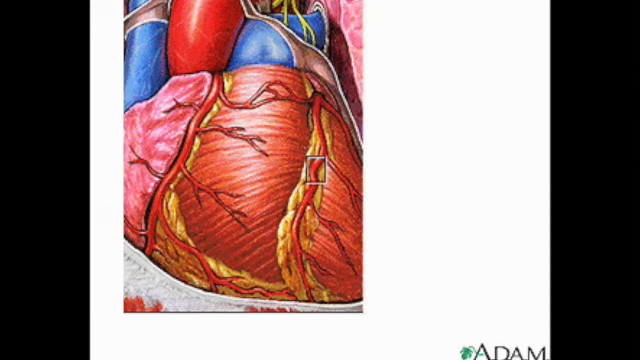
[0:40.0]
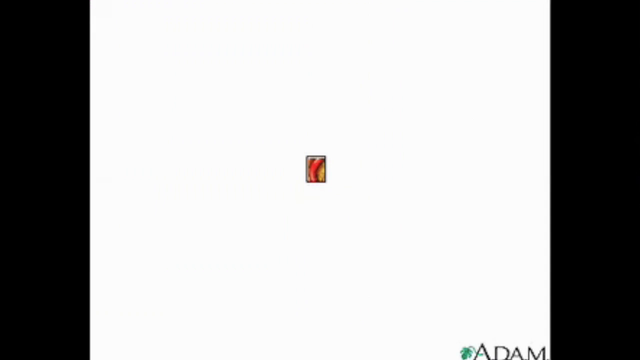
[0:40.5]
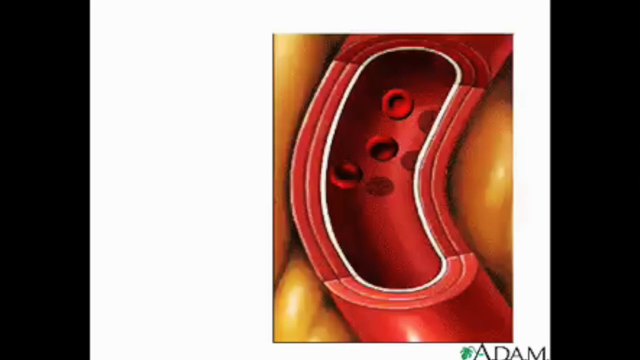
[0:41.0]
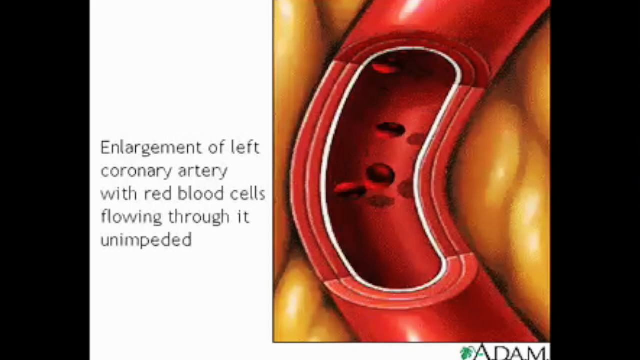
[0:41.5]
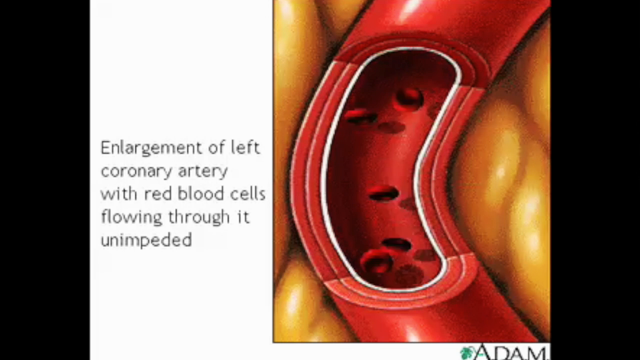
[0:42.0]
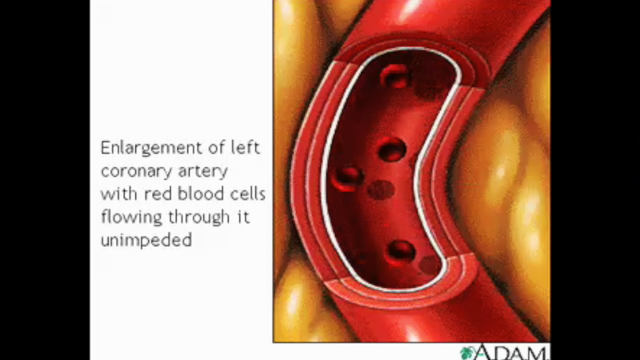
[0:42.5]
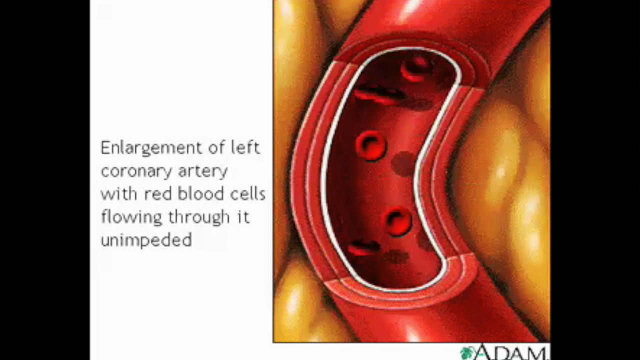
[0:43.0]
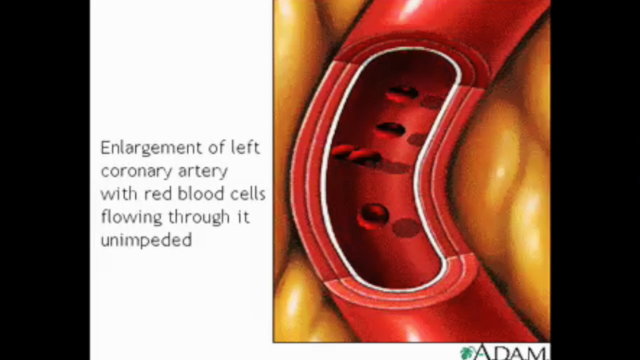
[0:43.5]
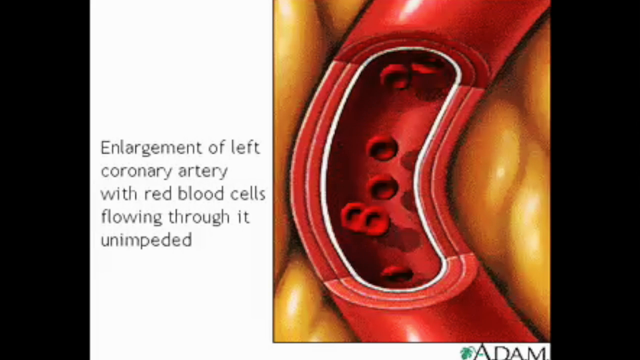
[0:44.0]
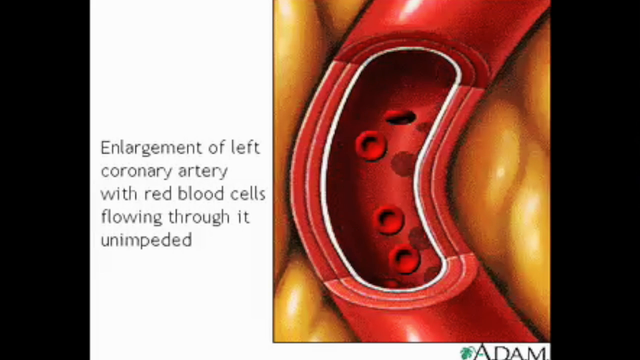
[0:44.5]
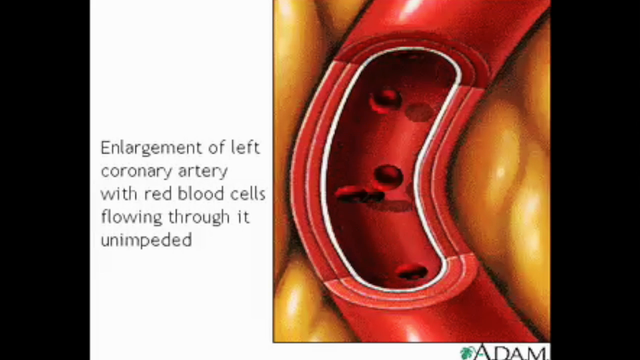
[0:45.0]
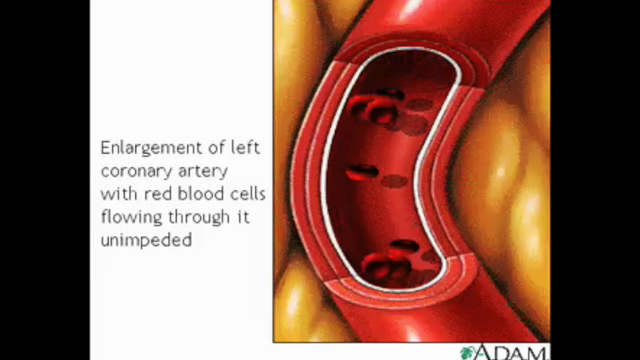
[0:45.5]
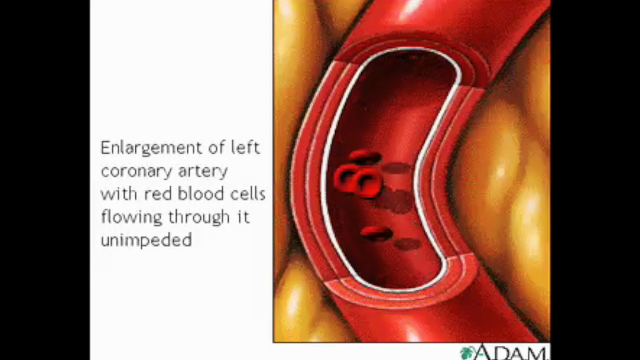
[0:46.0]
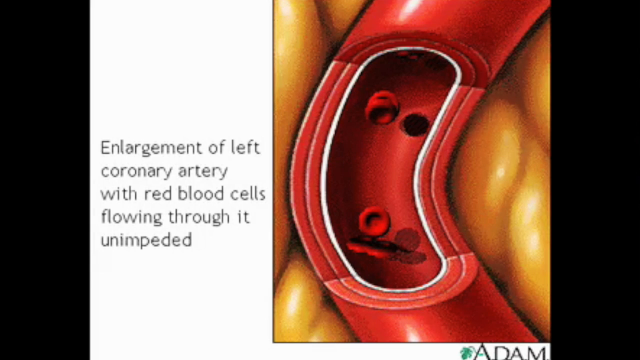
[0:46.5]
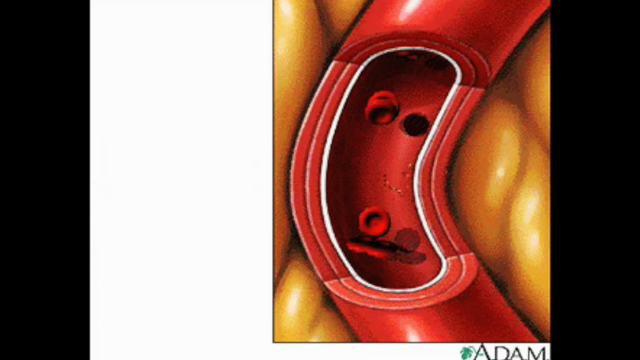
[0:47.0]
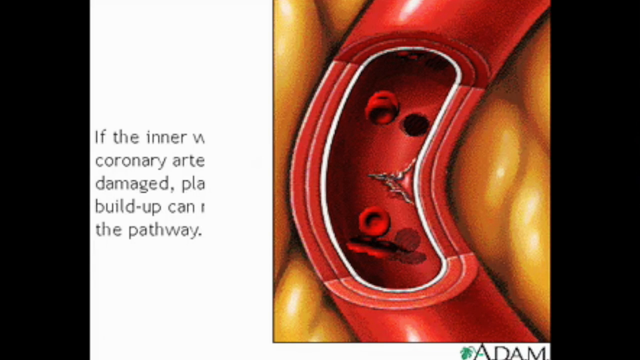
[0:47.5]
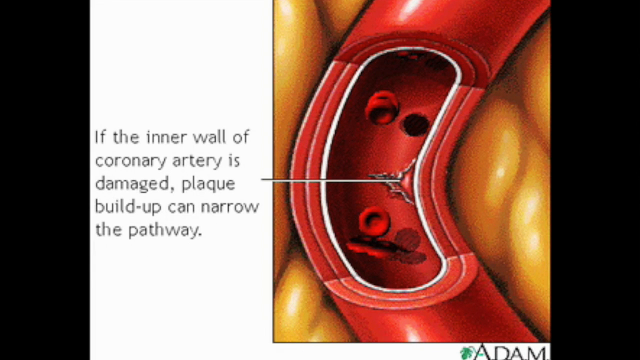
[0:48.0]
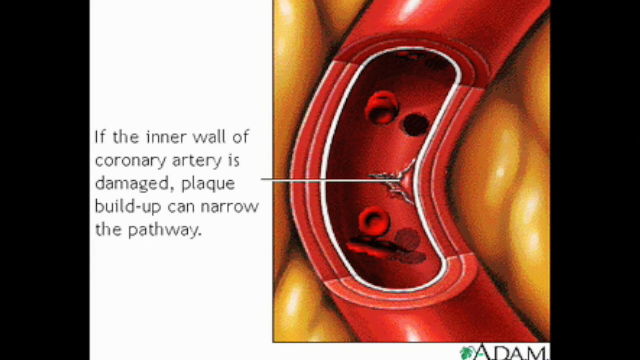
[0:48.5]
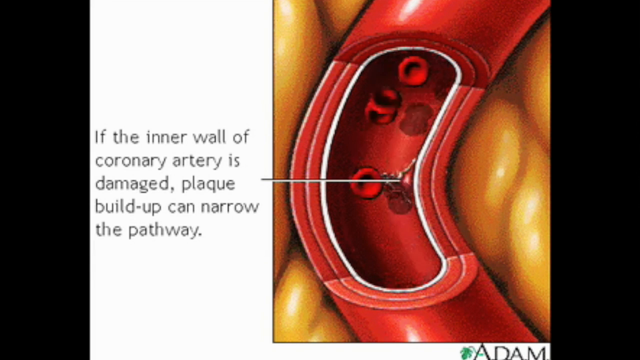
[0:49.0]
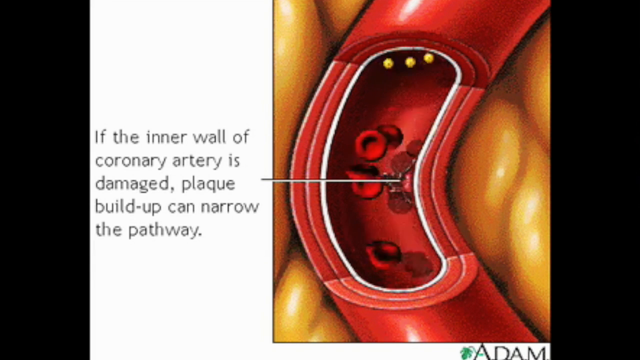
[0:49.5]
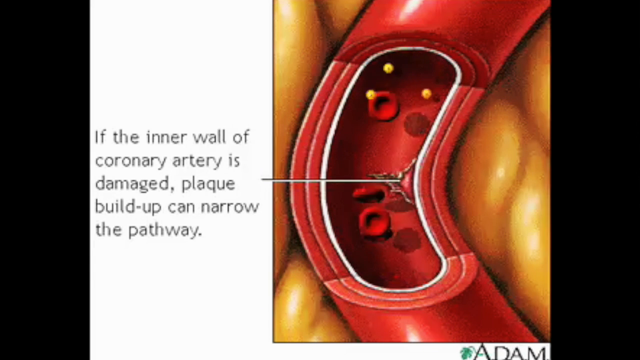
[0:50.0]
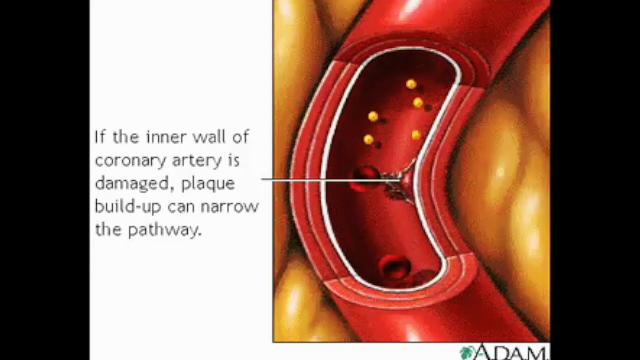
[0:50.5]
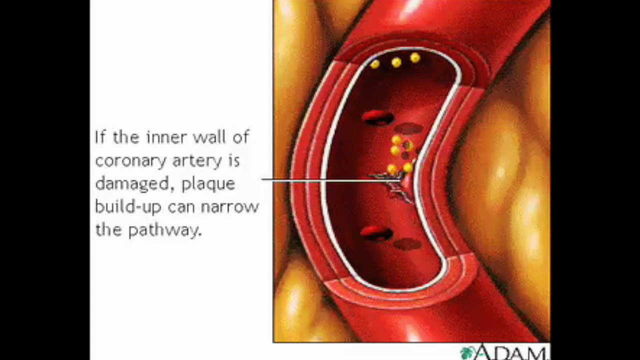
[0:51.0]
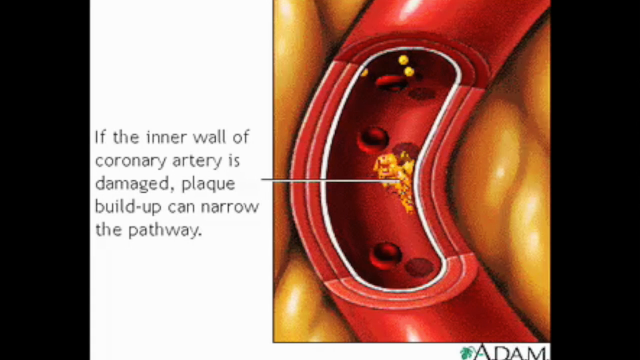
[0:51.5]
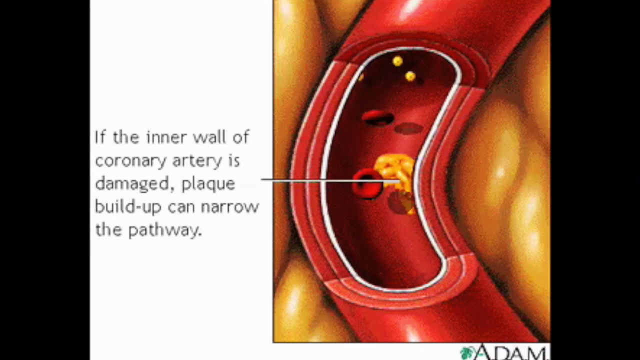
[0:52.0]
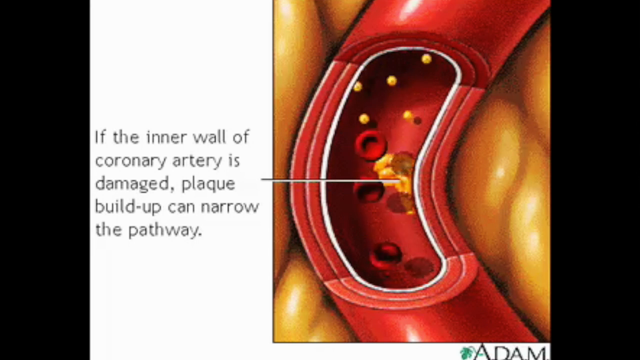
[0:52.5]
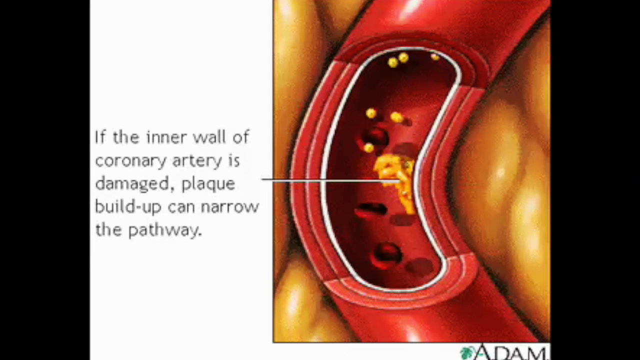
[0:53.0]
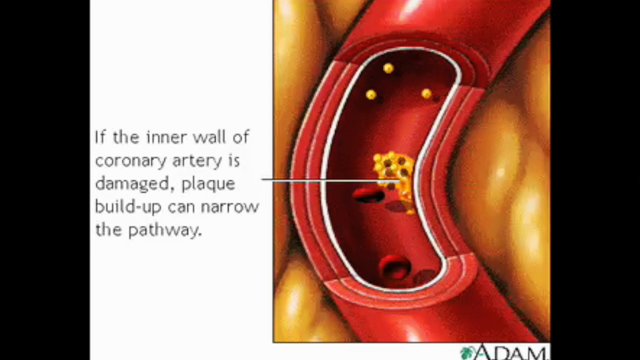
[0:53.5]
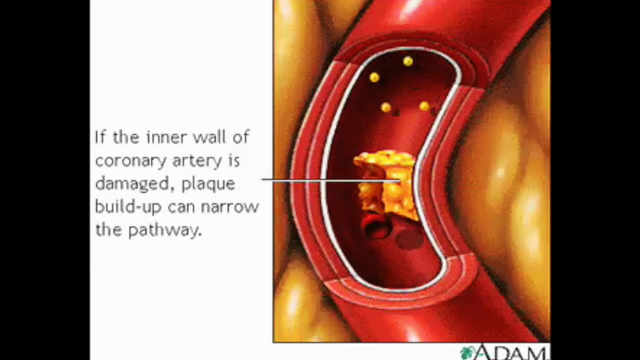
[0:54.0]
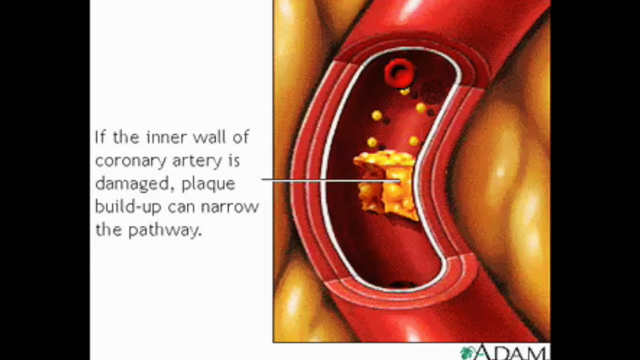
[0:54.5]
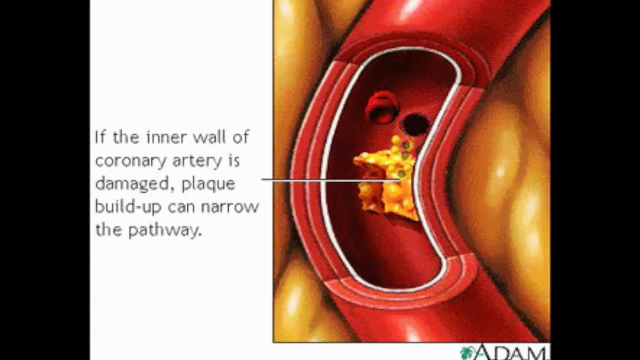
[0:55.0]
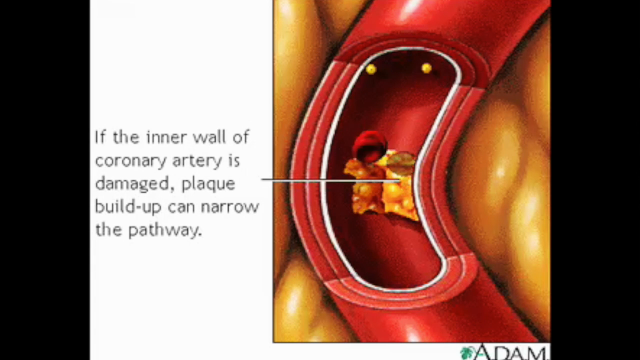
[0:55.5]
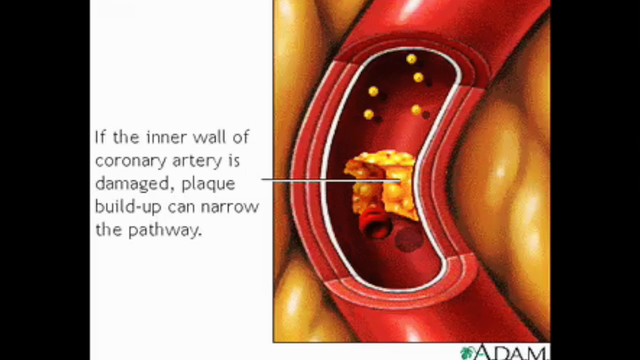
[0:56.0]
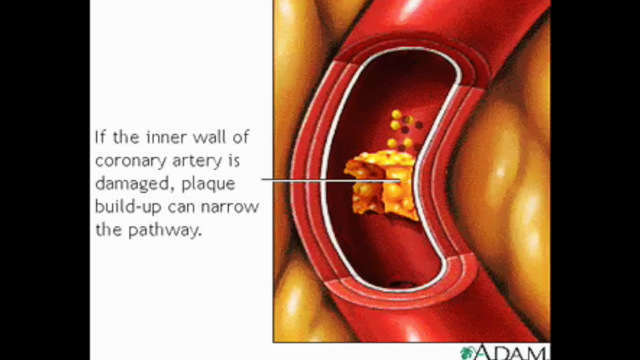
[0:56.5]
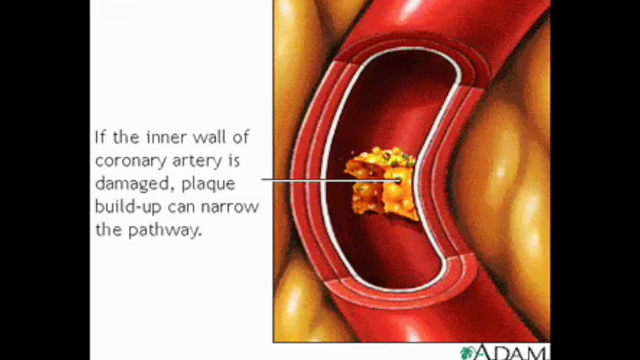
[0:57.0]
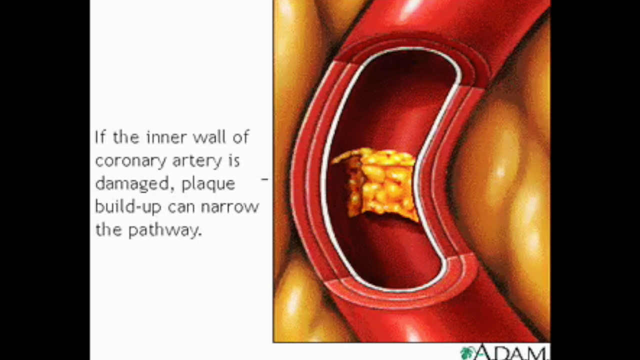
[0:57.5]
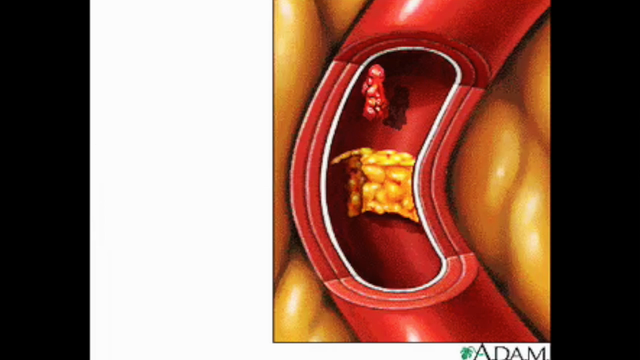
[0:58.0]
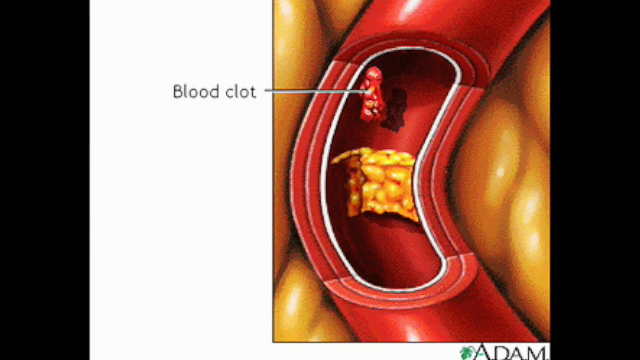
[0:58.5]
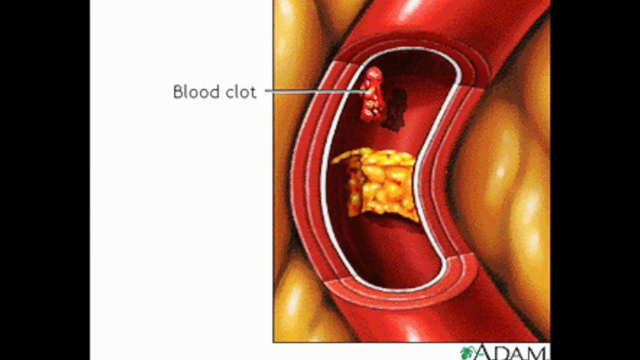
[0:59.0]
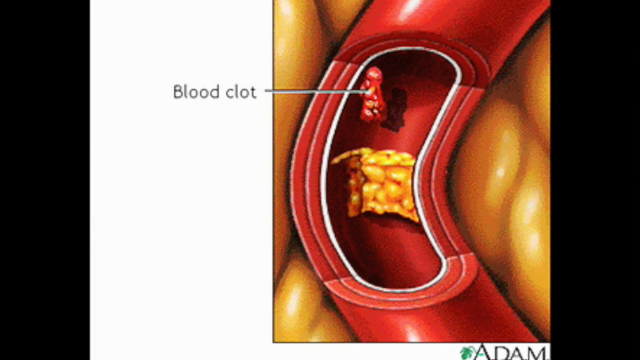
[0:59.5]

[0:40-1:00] An animation shows blood cells flowing through a coronary artery, first in healthy function. The coronary artery is red, and the back of it is yellow, possibly some kind of yellow fat cells. The blood cells move unimpeded, but when there is damage, plaque builds up and causes a blockage. The plaque appears in a lighter yellow, whitish color and gradually restricts the flow through the artery. The buildup happens slowly and somewhat randomly, starting and stopping, spreading across the artery until it covers enough of it to form a sufficient blockage. At the end, the artery is starting to be clogged and a blood clot appears there.